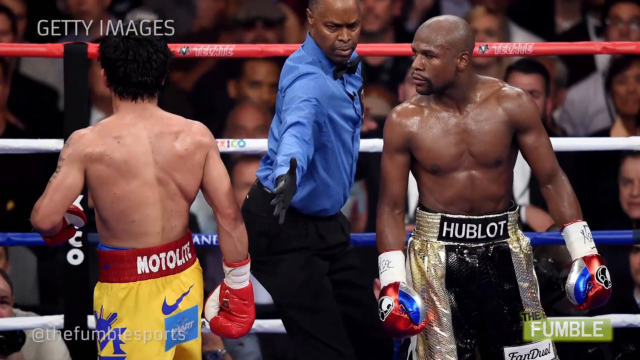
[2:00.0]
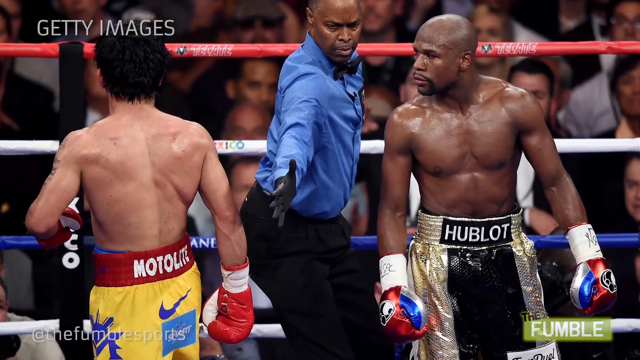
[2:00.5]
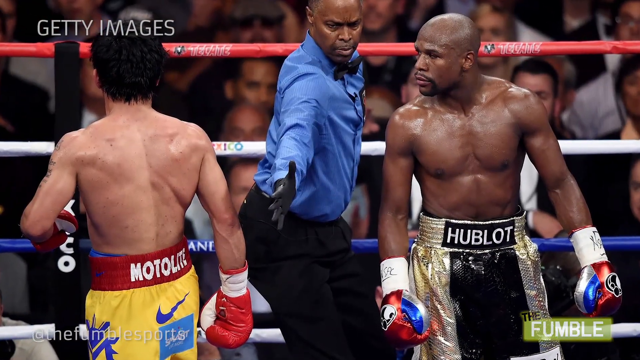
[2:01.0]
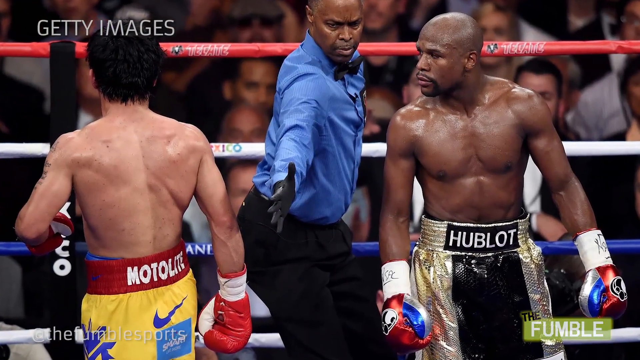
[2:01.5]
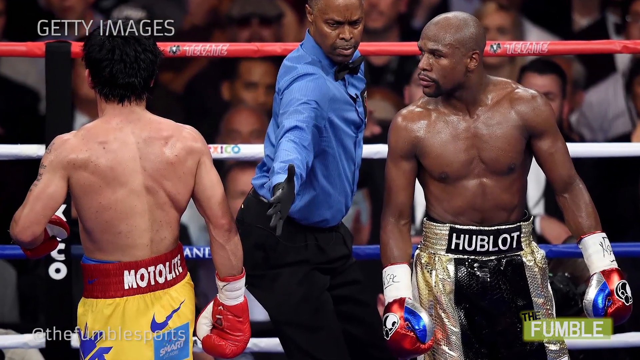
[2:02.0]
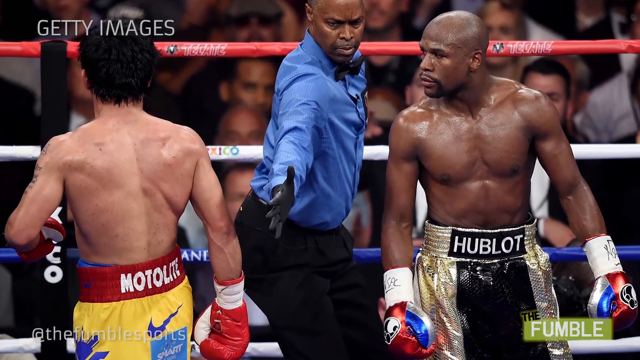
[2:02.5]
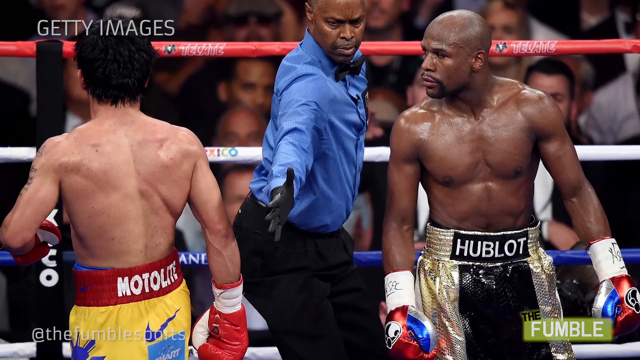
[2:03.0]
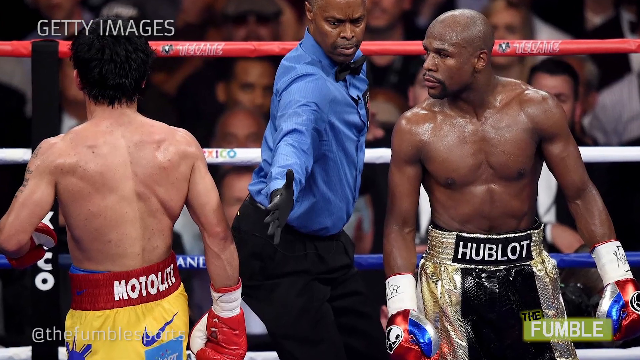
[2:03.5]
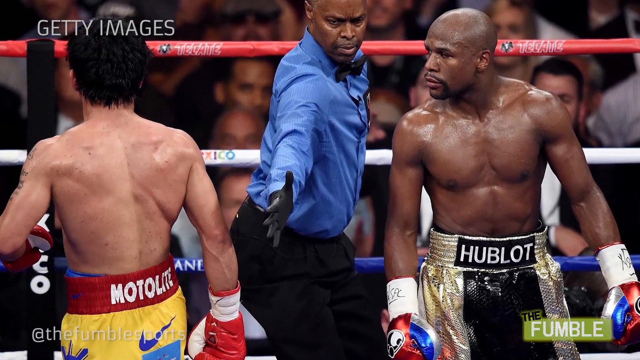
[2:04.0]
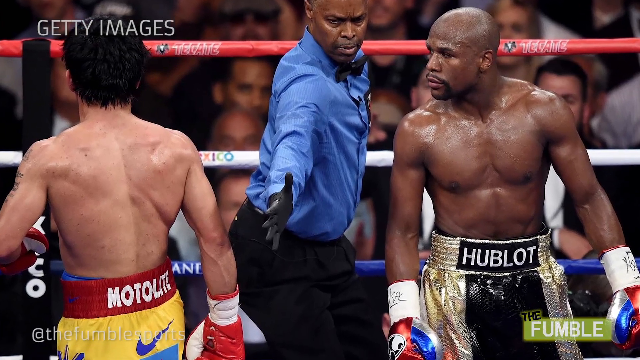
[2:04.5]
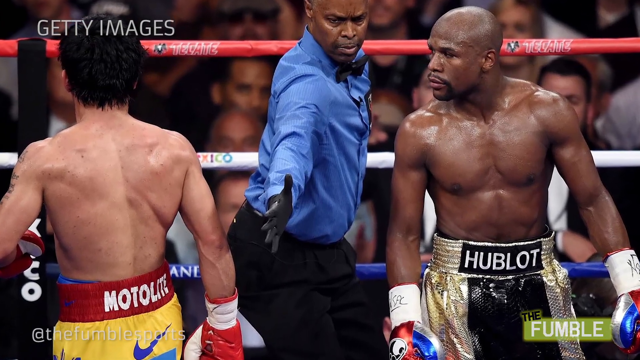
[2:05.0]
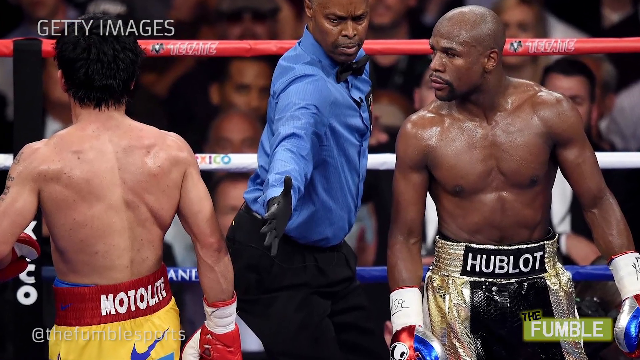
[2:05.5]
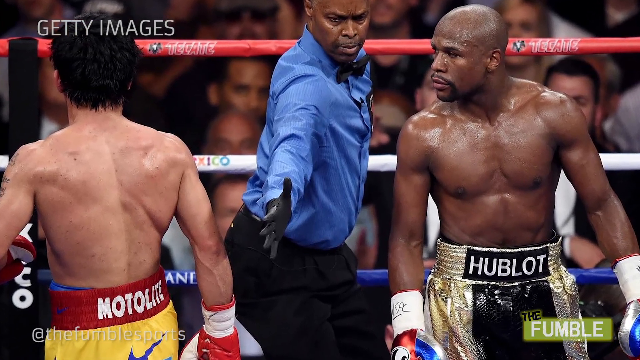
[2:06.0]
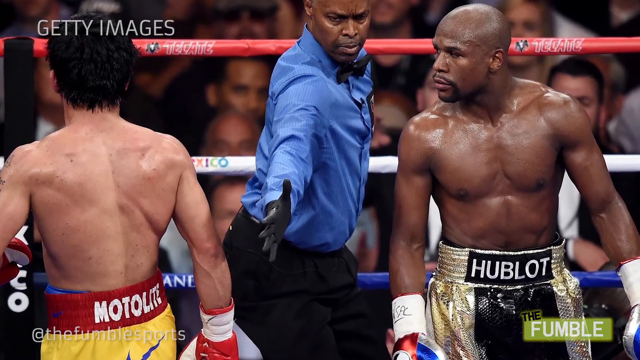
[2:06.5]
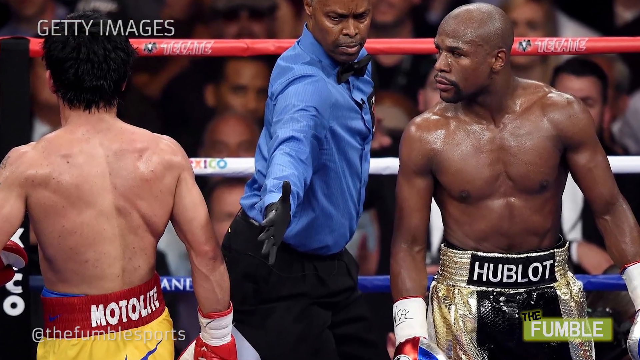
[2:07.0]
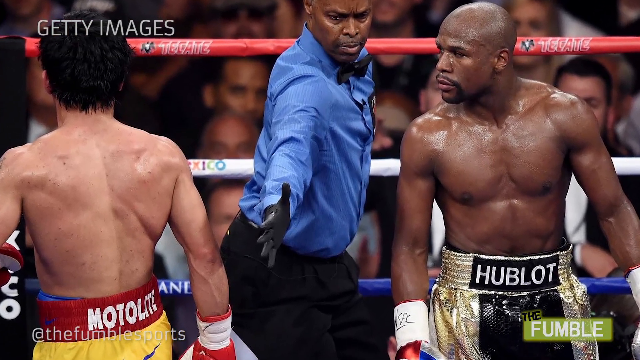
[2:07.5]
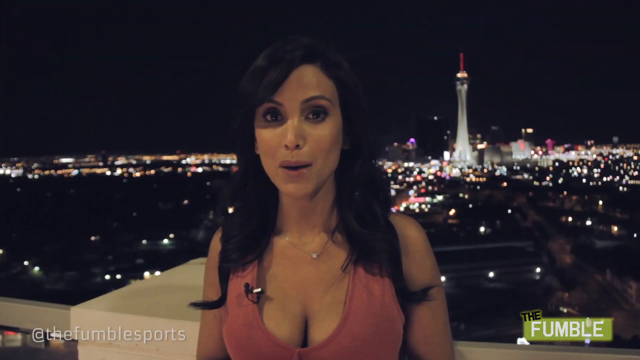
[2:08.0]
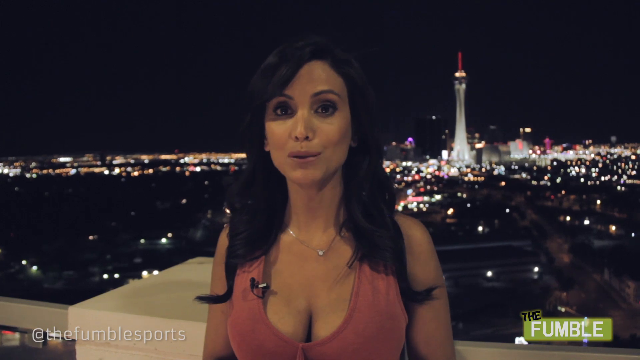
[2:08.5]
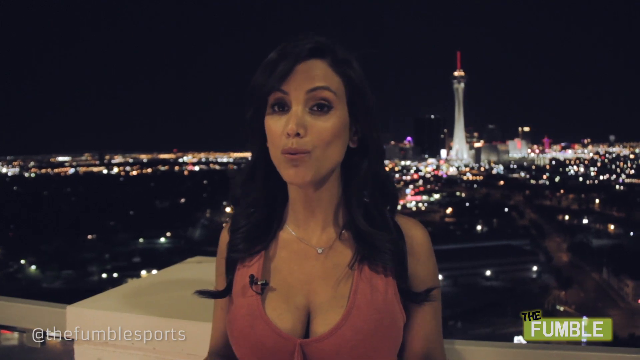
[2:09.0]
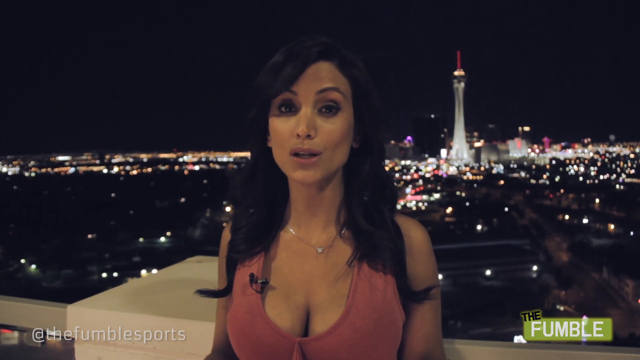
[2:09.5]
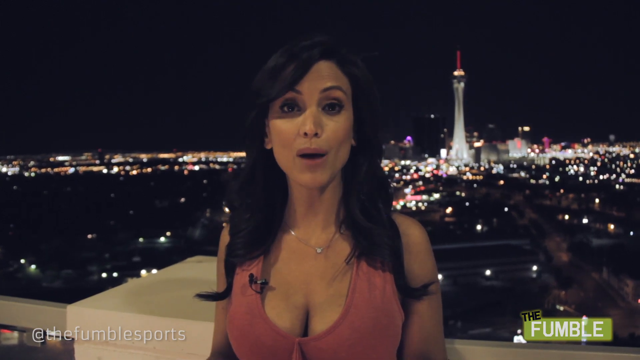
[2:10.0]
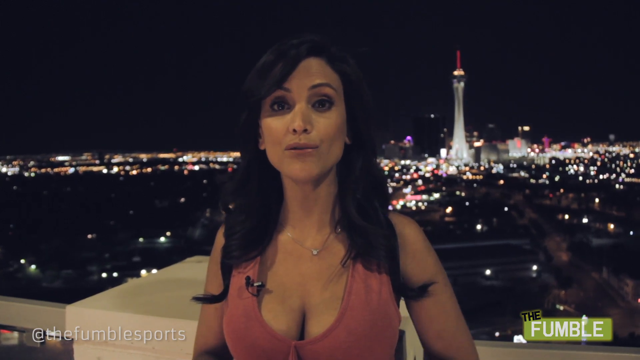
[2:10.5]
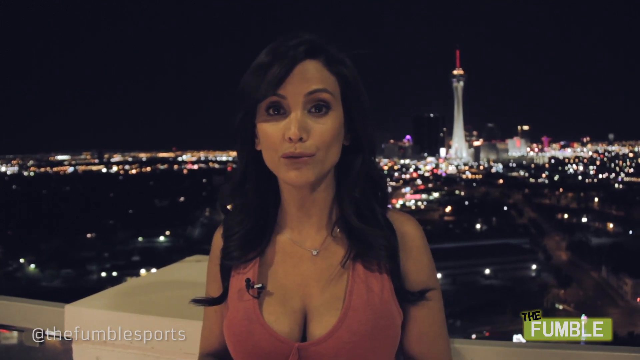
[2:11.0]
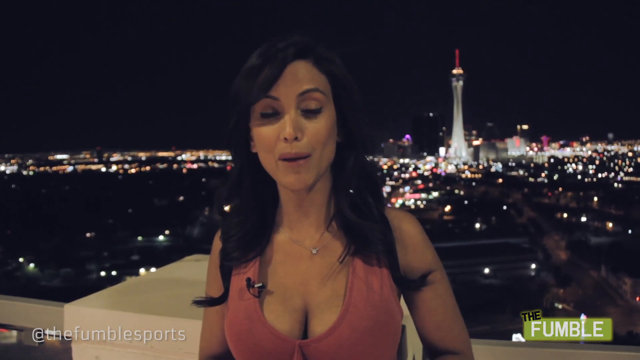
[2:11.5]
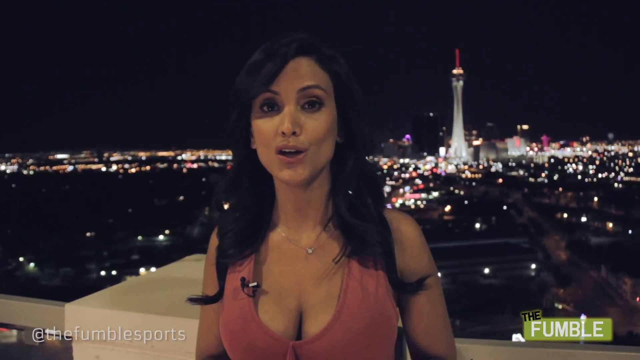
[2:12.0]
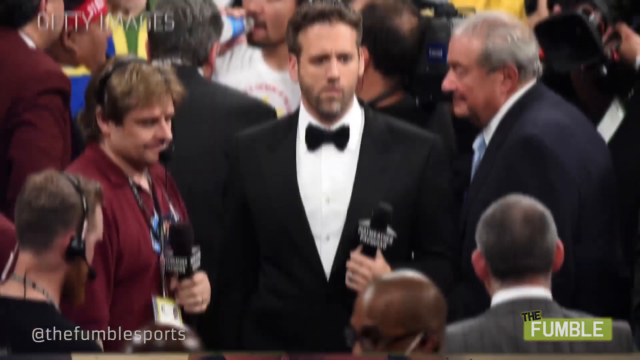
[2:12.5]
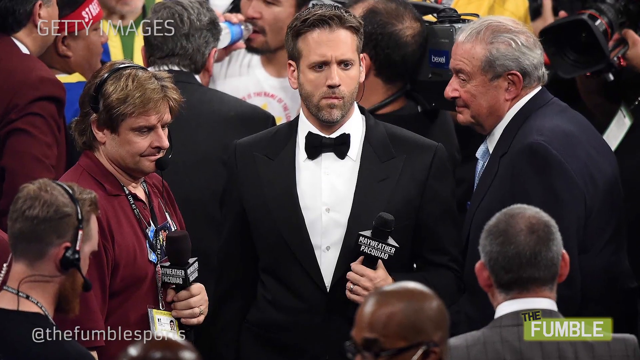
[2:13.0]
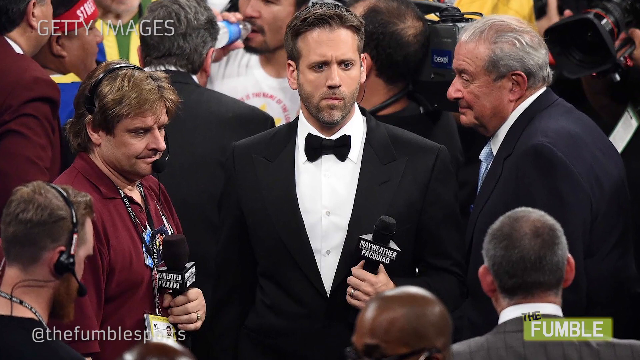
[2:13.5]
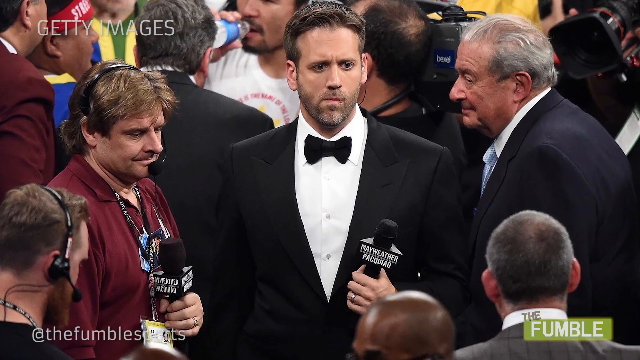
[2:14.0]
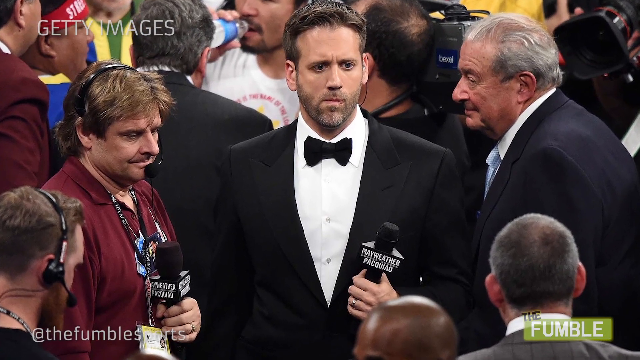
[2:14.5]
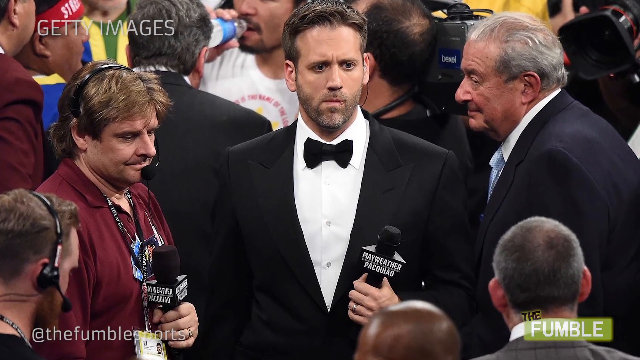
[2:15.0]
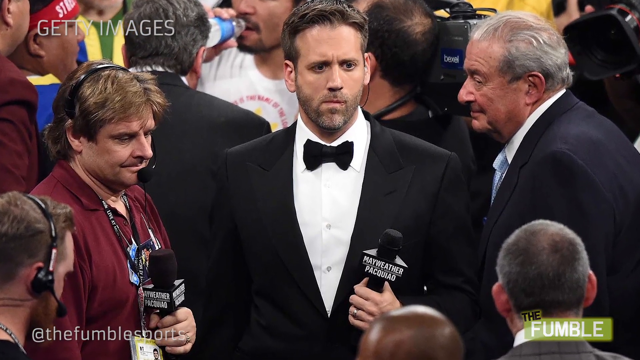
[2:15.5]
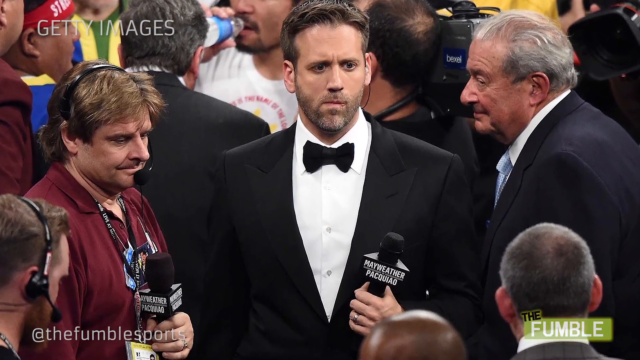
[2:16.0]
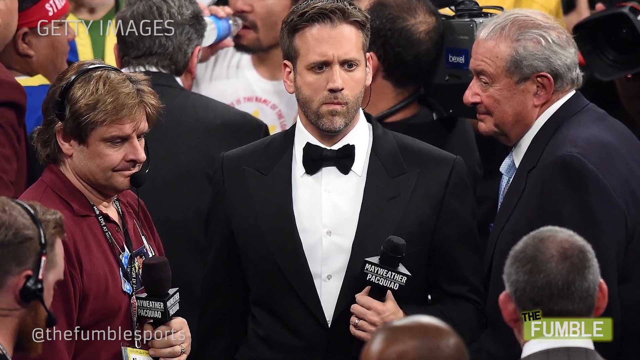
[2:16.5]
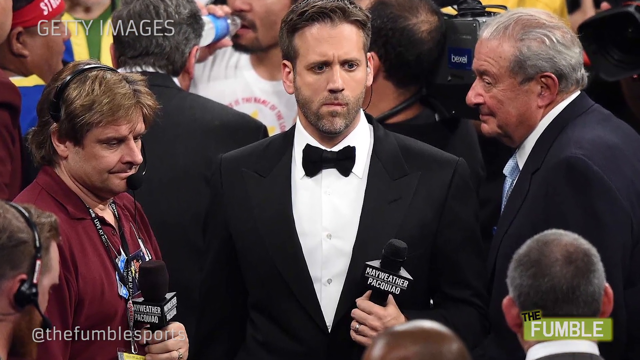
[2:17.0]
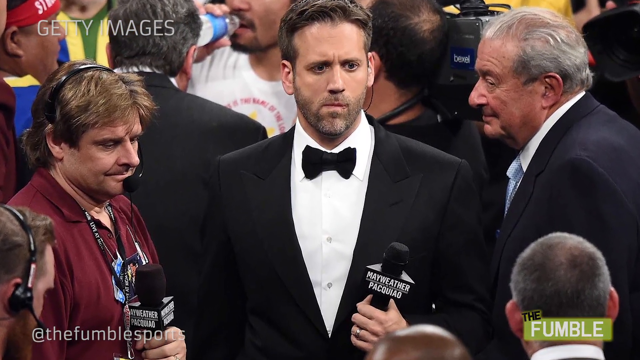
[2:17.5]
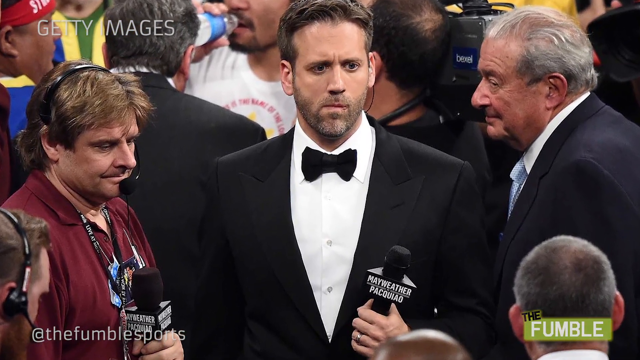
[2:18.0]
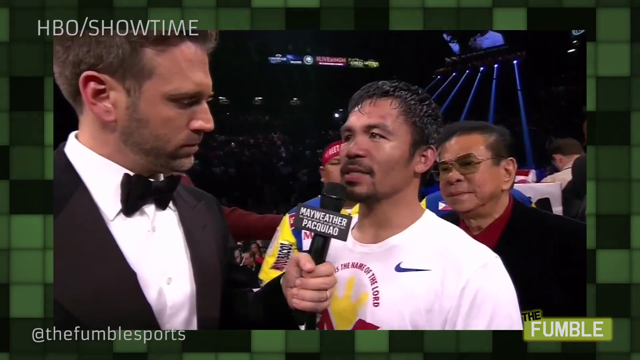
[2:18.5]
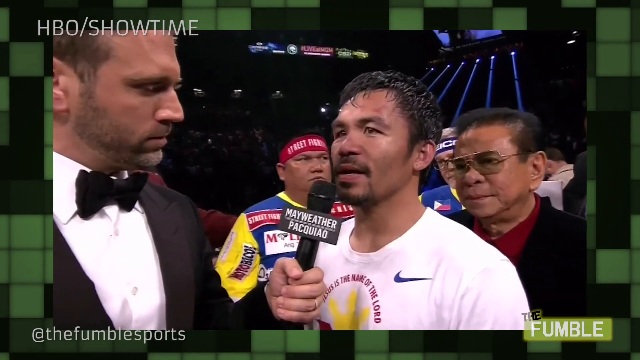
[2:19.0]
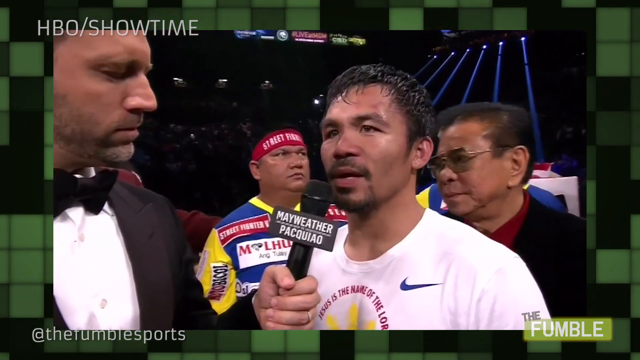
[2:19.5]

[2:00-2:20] A still photograph shows Mayweather and Pacquiao mid-fight inside the boxing ring. Pacquiao faces away from the camera and Mayweather faces toward it, and between them the referee has his hand outstretched as though trying to keep the boxers away from each other. The scene changes to a woman news reporter with a night cityscape behind her, talking toward the camera with an apparently relatively neutral expression. Next is a still photograph of a white male wearing a black suit and a bow tie, with two people, one on either side of him, holding microphones; one of them has a headset on. They look like reporters interviewing him. The video then shows Pacquiao being interviewed by the presenter or the man in the suit from the preceding photograph.